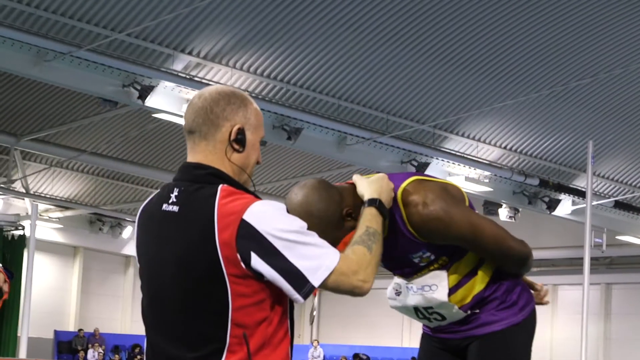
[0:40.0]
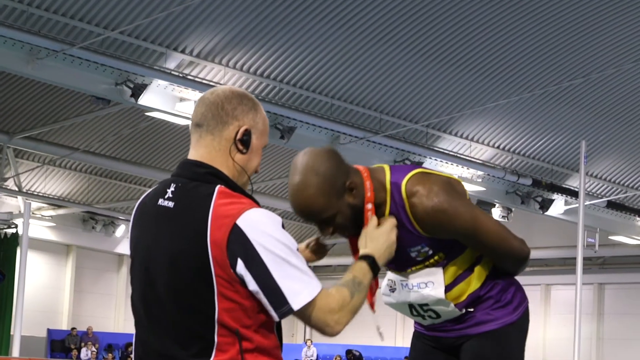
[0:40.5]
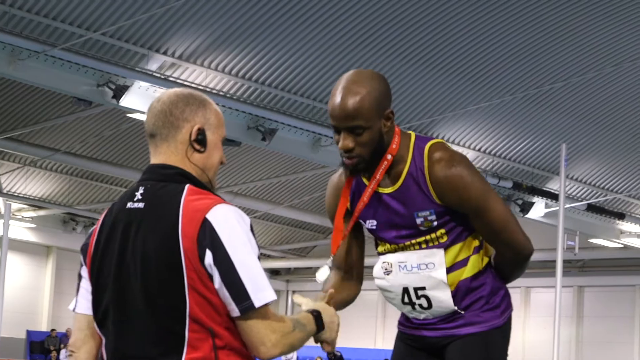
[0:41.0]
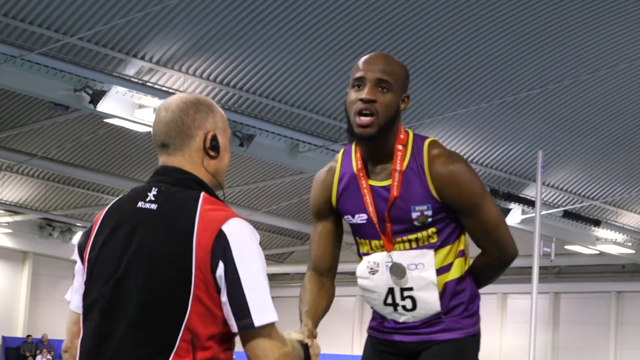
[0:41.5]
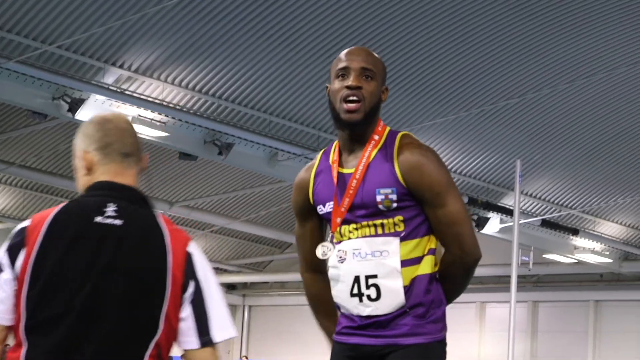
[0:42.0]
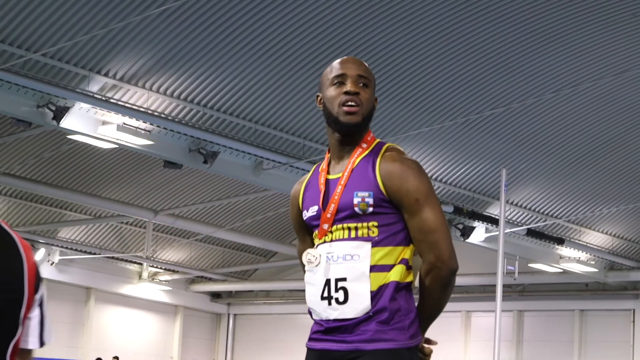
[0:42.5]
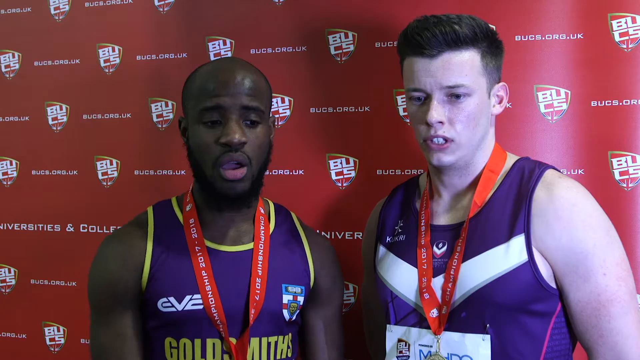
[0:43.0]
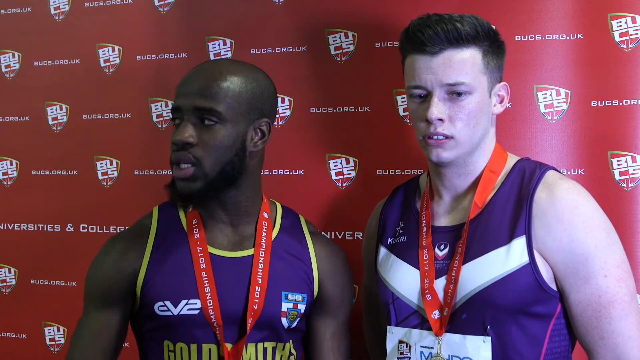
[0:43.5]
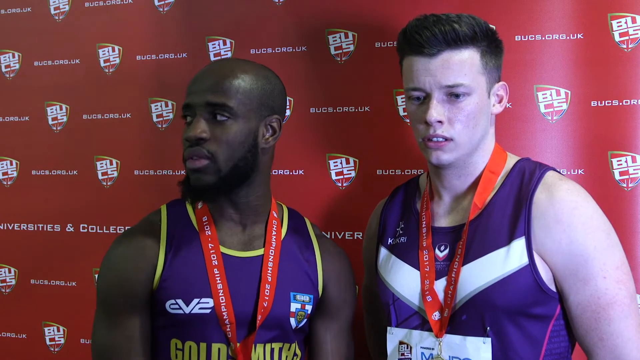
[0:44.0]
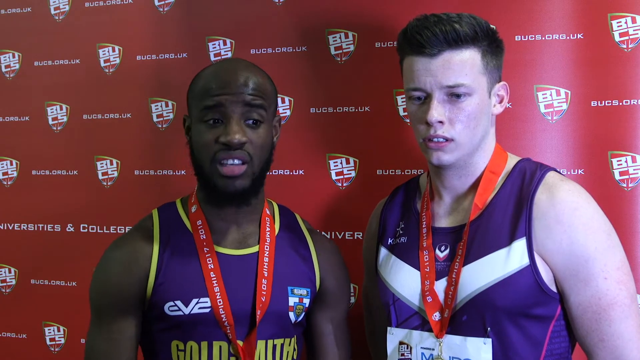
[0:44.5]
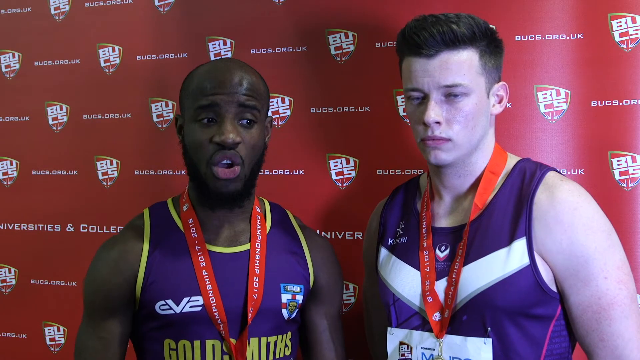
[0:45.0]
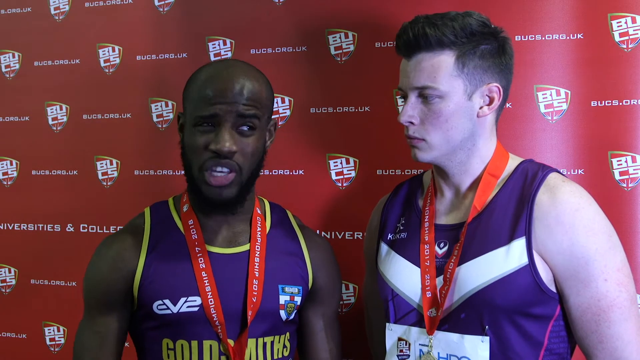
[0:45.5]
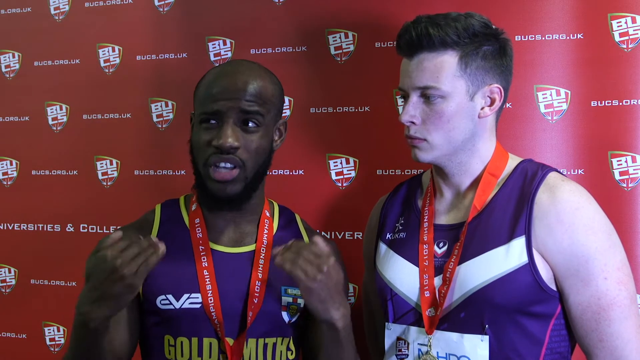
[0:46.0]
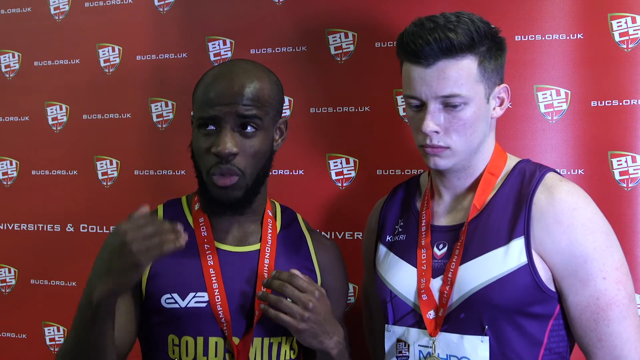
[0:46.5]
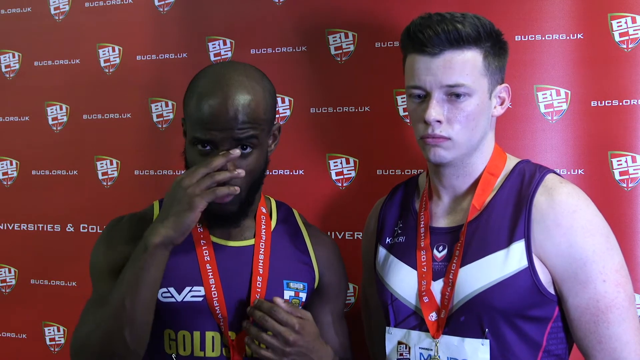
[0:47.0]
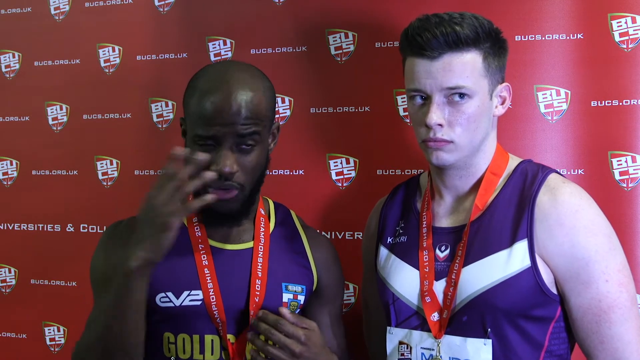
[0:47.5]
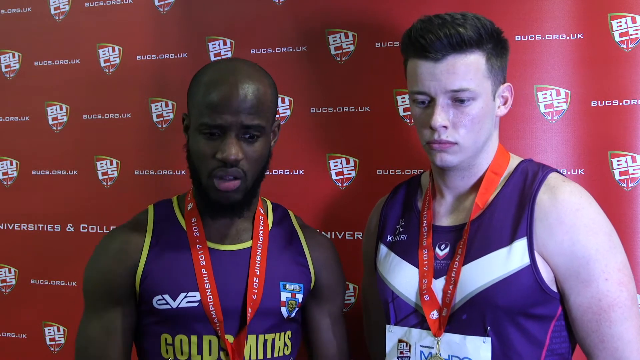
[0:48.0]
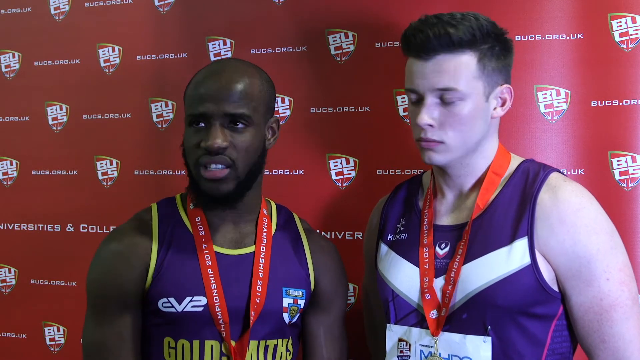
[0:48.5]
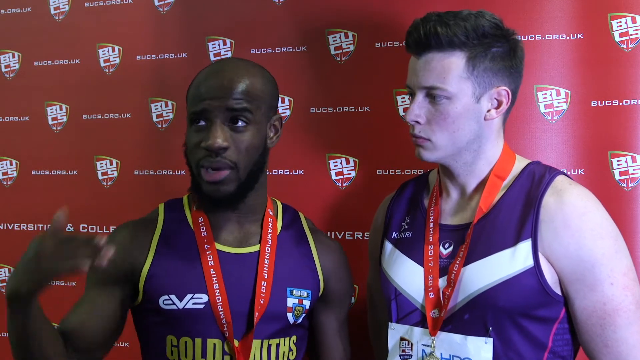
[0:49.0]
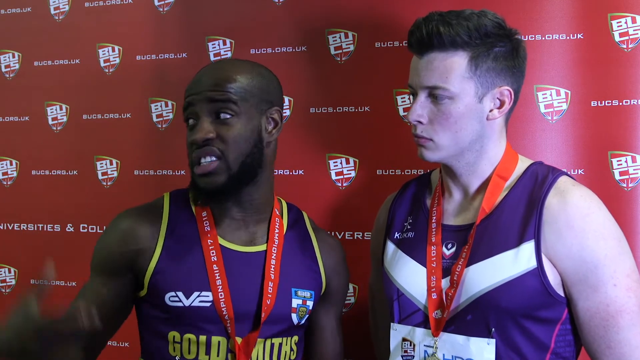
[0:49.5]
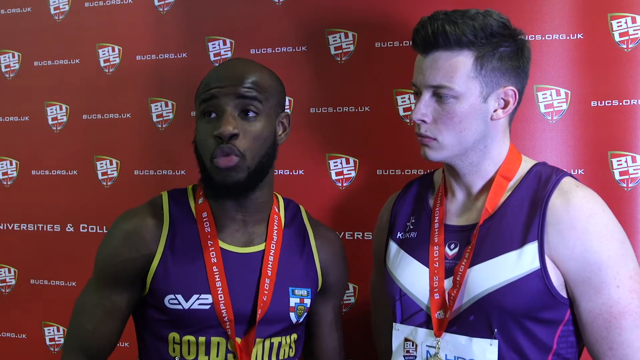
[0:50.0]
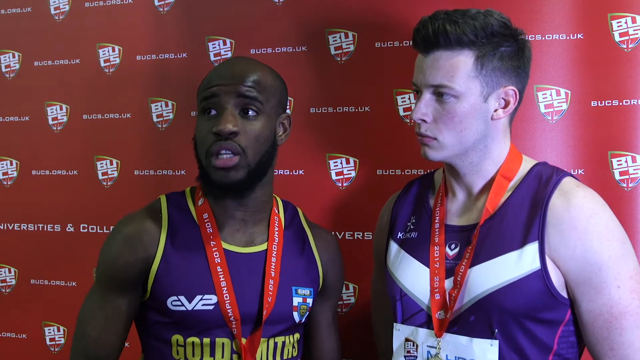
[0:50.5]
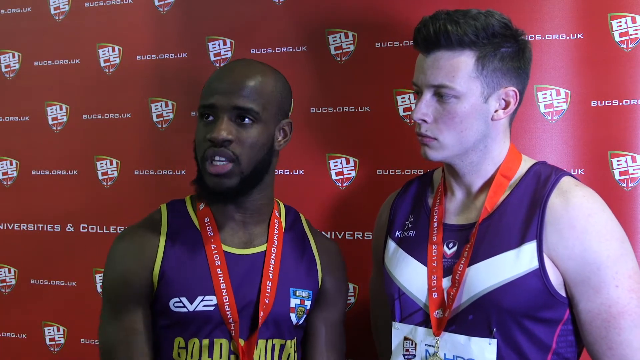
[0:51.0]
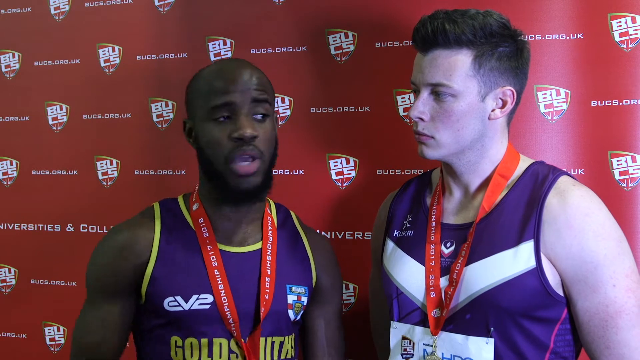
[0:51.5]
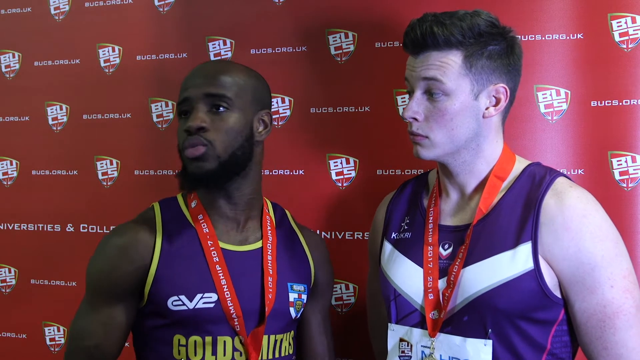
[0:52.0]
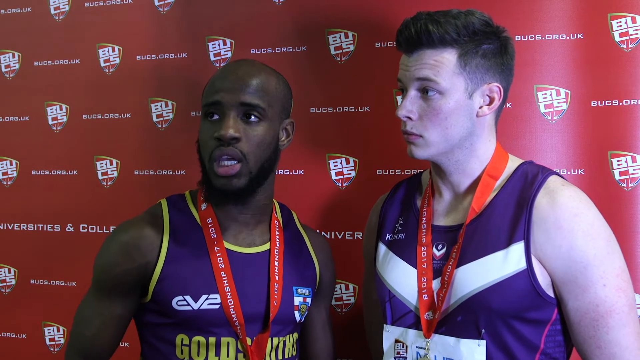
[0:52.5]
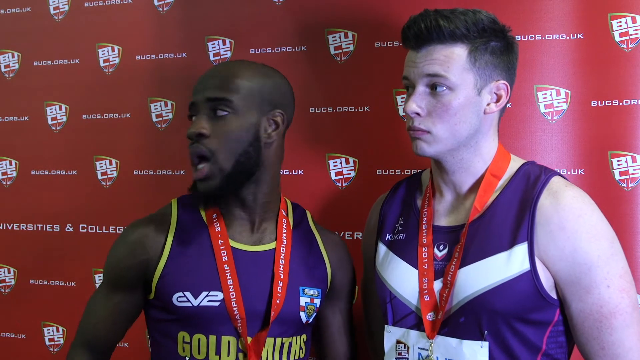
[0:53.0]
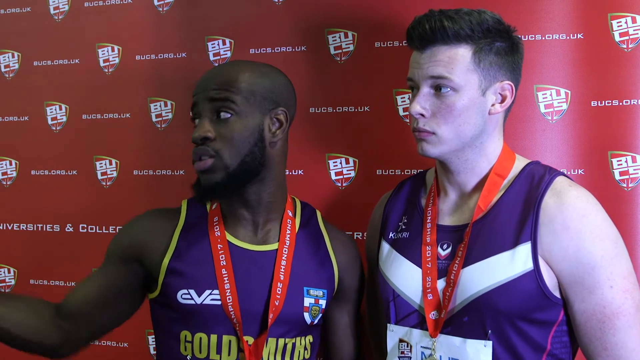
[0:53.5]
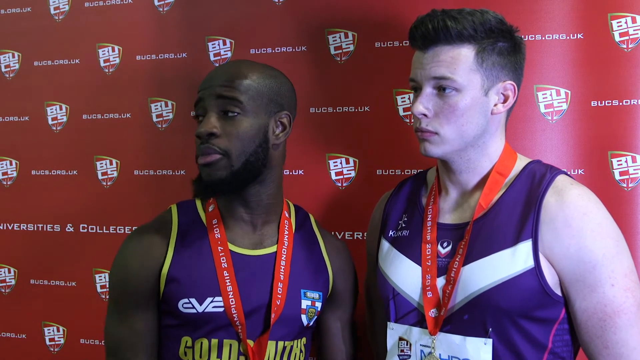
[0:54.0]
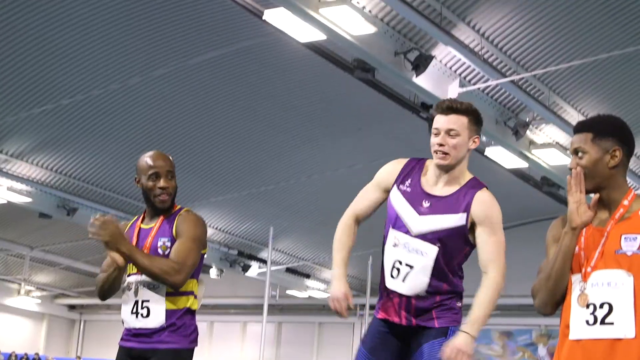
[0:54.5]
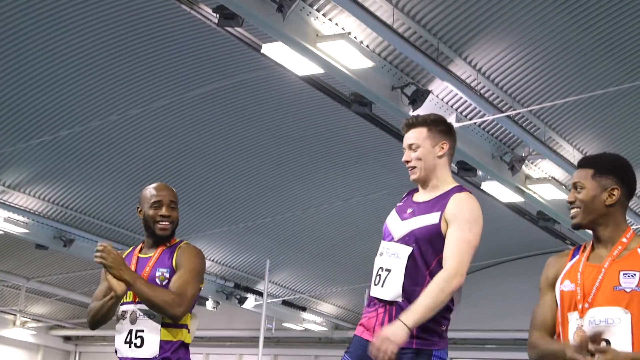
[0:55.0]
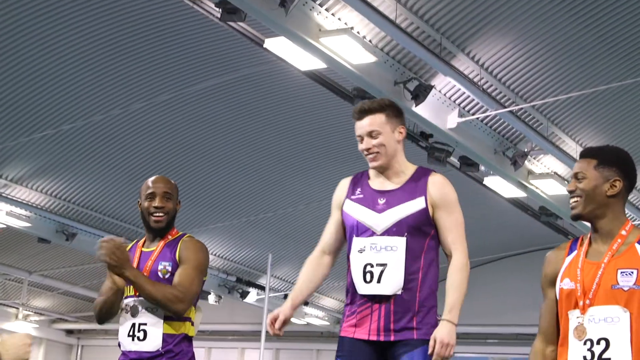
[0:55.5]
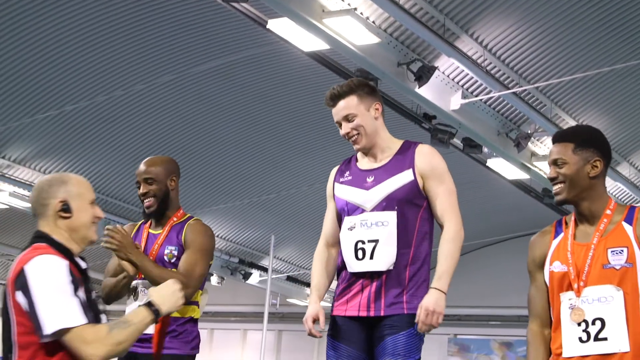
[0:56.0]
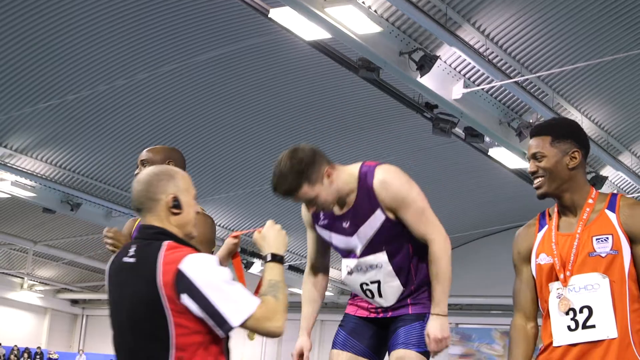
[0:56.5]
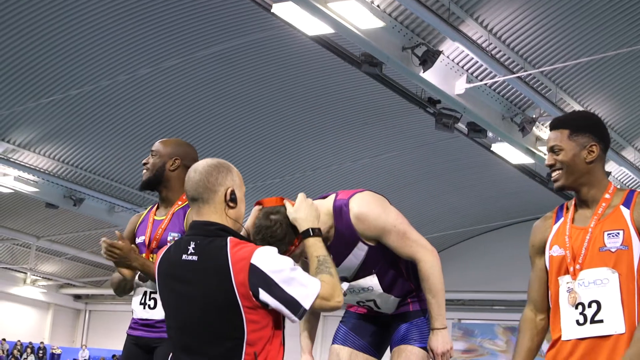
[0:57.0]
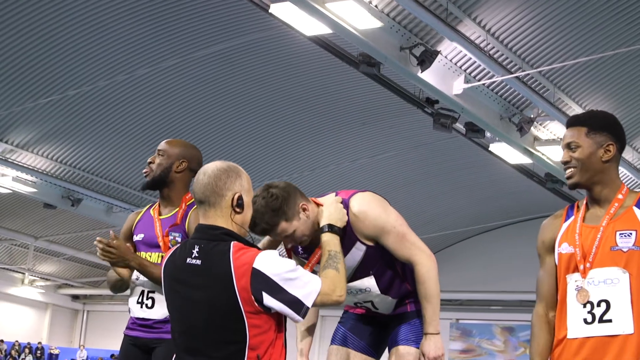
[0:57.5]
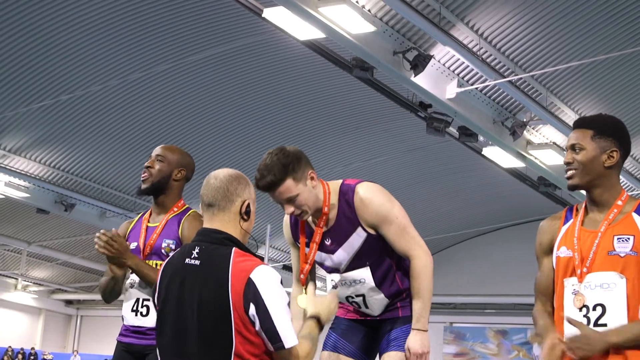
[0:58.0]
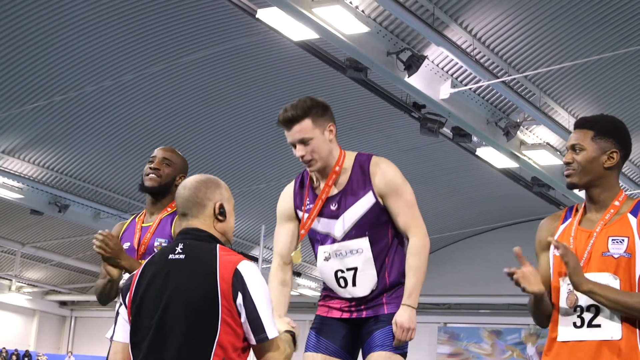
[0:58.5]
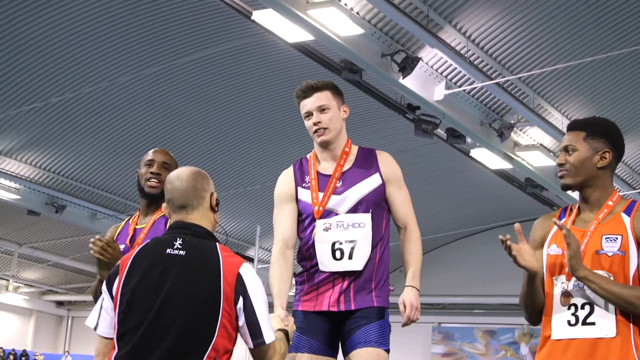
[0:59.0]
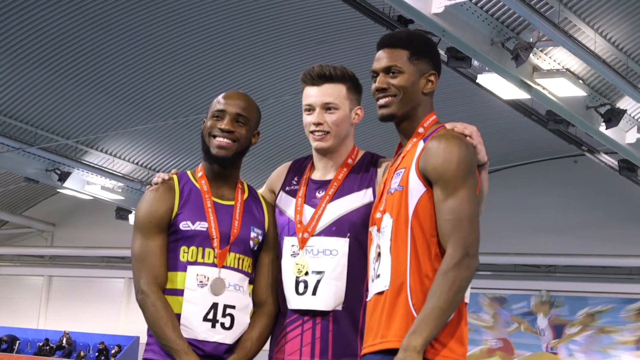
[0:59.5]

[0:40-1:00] An athlete stands on a podium, leaning forward as a medal is draped around his neck by an official in a black, red and white t-shirt. The athlete shakes the official's hand as the official walks away; the official is seen only from the background. The athlete wears a purple tank top with yellow trim around the neck and sleeves and two yellow horizontal lines across the body, and the number 45 is written on white paper on the front of it. The same athlete is then side by side with another athlete, the two speaking with their backs to a red backdrop. The medal winner is a bald black man with a beard; the other athlete, on the right, is a slightly taller white man with a full head of hair cut shorter at the sides, and he also wears a medal. The medals themselves are not visible, only their ribbons, since the men are shown from head to chest. The black athlete continues to speak and gesture. Then the athlete on the right receives his own medal, standing between two other athletes on the podium, with the number 65 on the front of his purple tank top. He smiles and leans forward as the medal is hung on his neck.